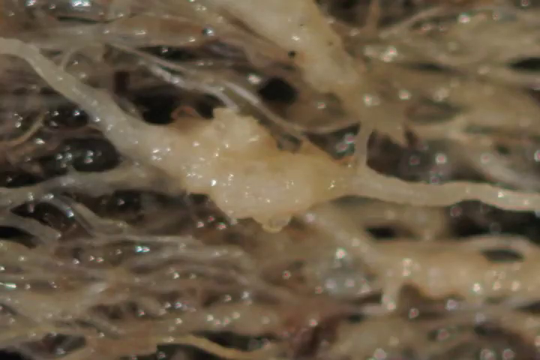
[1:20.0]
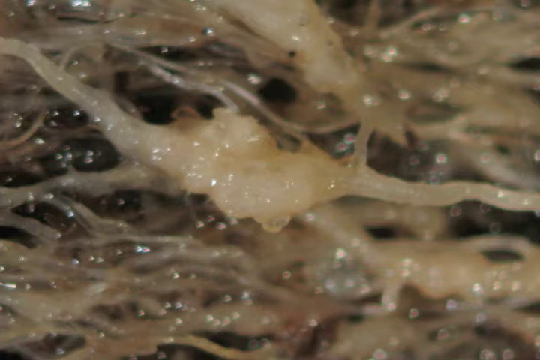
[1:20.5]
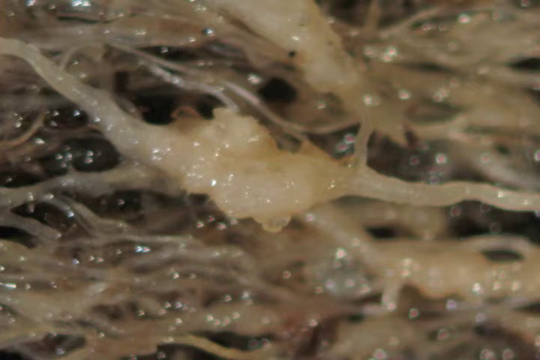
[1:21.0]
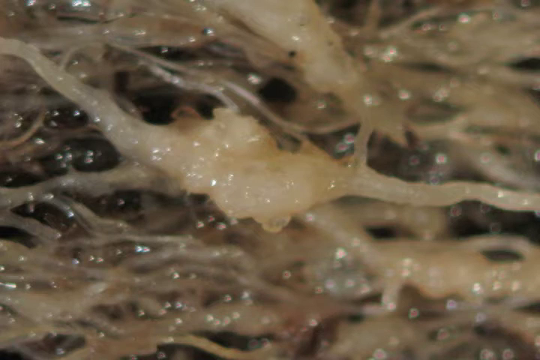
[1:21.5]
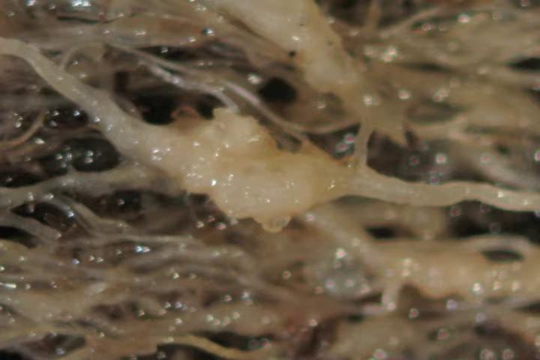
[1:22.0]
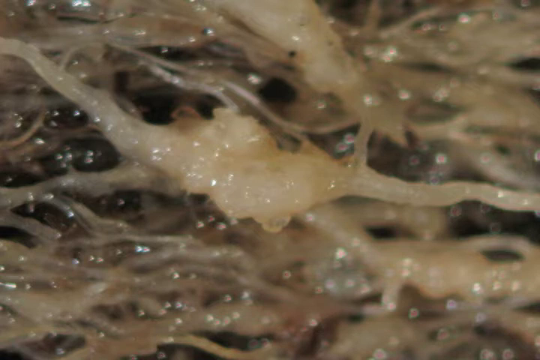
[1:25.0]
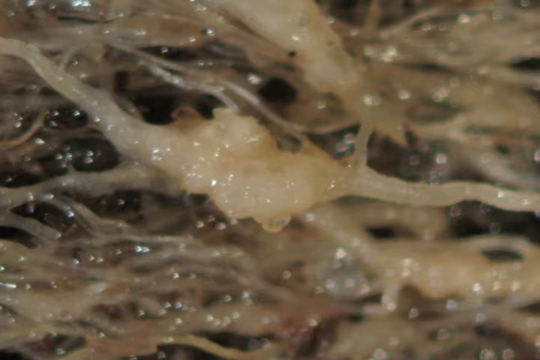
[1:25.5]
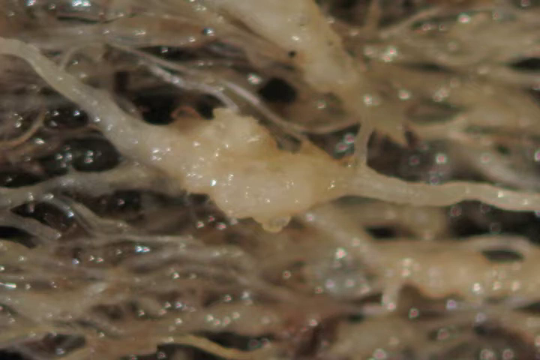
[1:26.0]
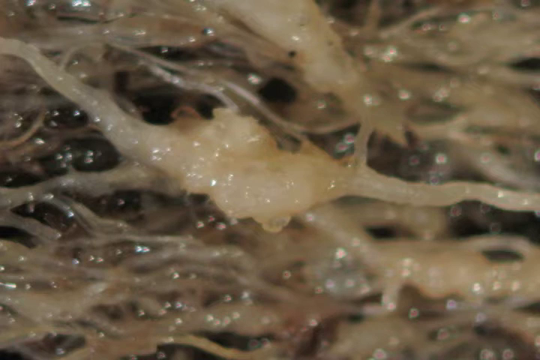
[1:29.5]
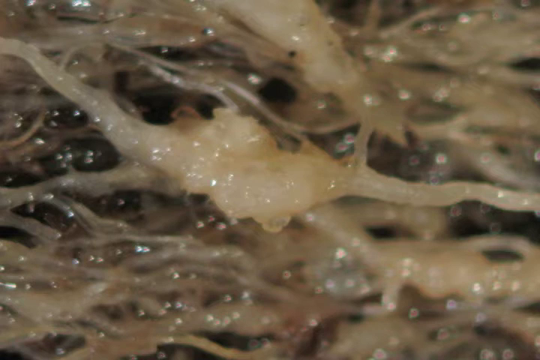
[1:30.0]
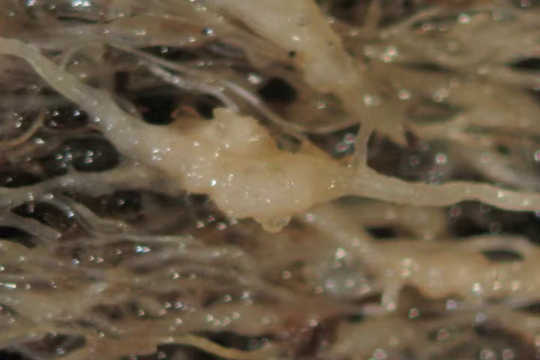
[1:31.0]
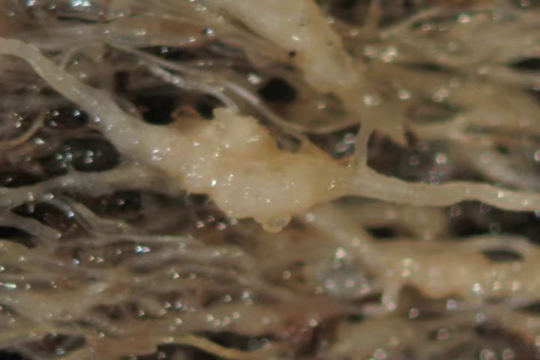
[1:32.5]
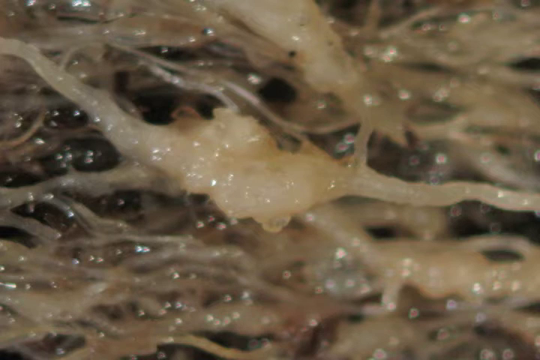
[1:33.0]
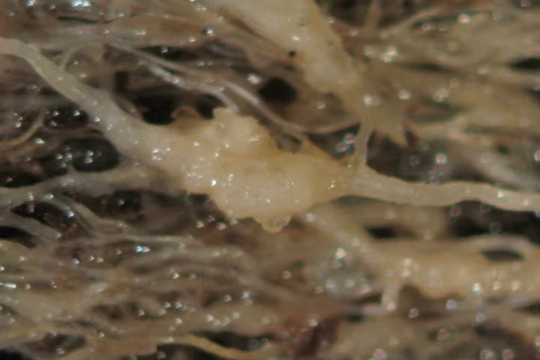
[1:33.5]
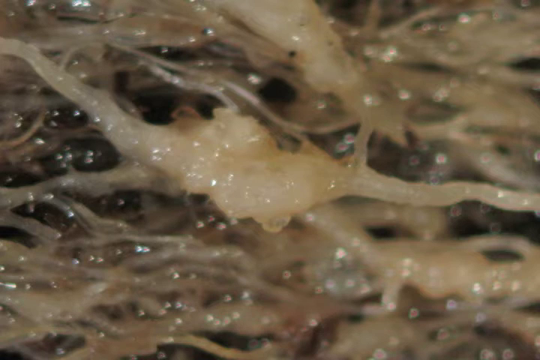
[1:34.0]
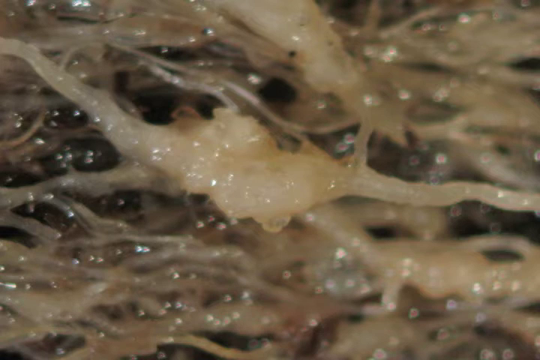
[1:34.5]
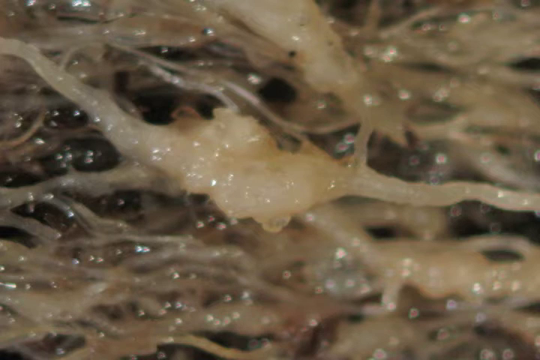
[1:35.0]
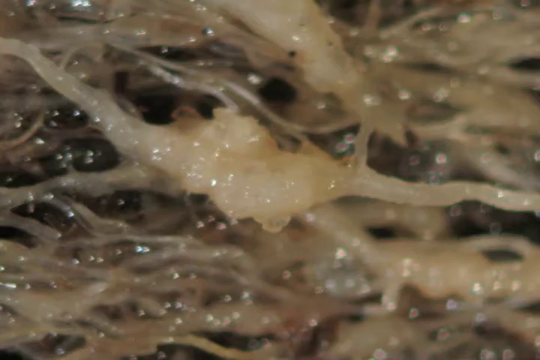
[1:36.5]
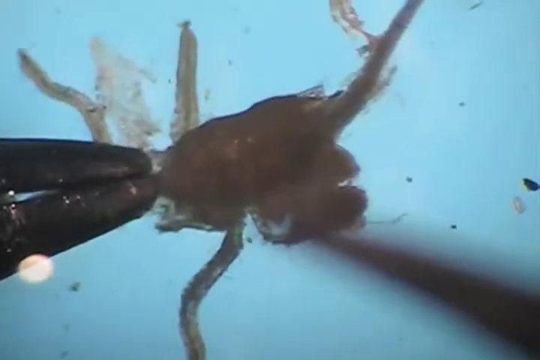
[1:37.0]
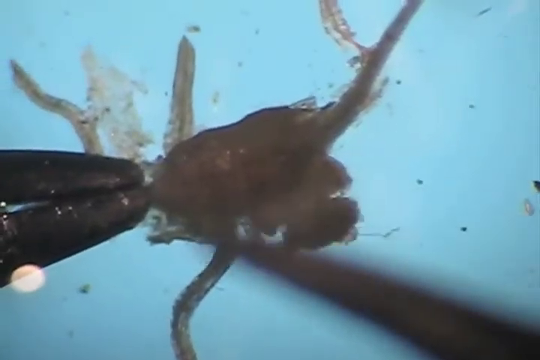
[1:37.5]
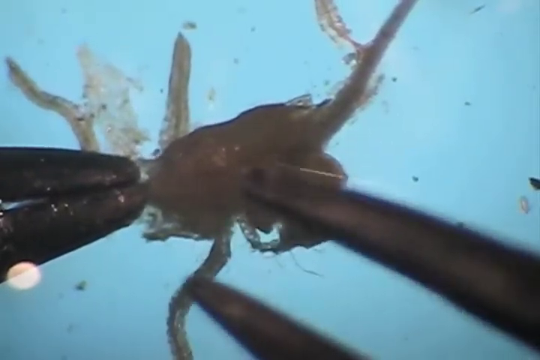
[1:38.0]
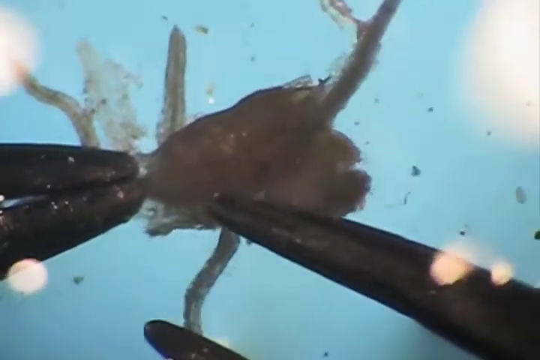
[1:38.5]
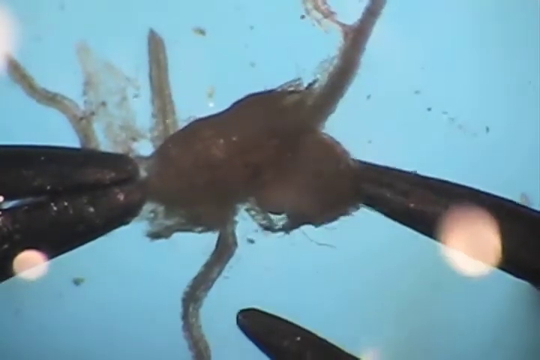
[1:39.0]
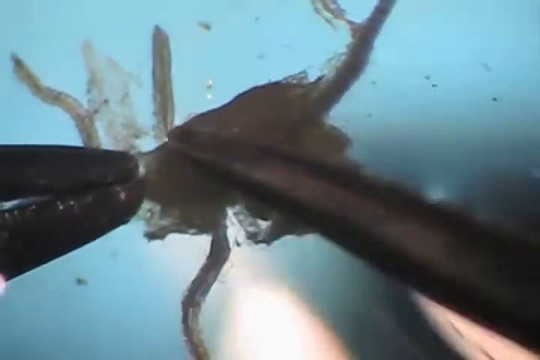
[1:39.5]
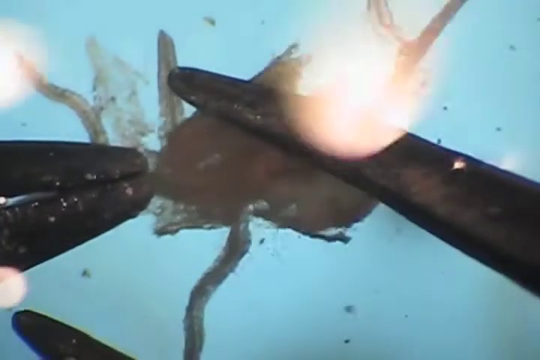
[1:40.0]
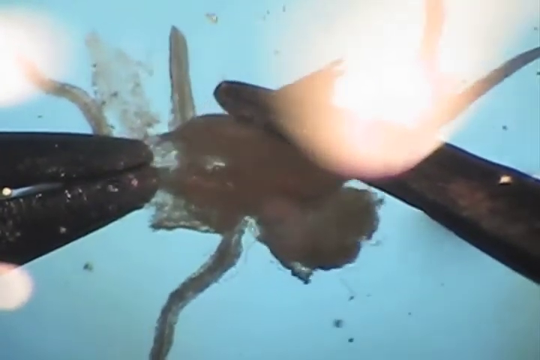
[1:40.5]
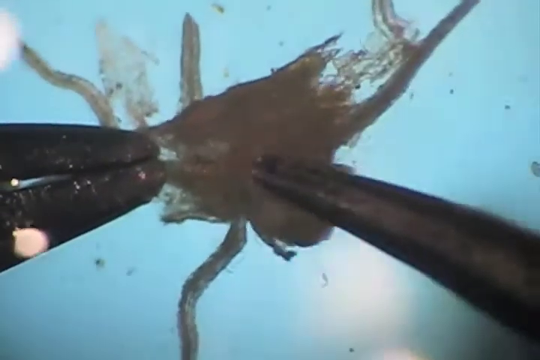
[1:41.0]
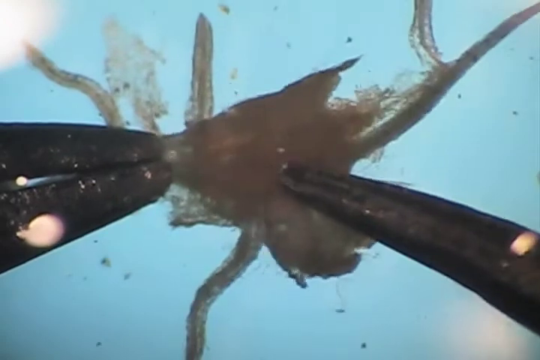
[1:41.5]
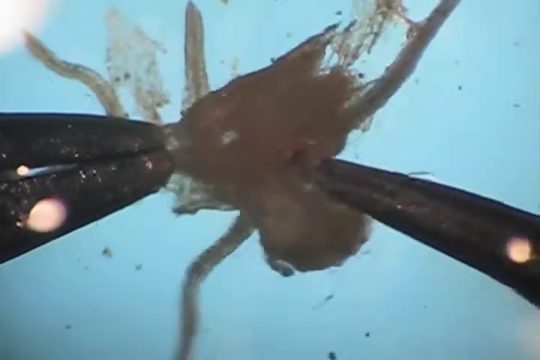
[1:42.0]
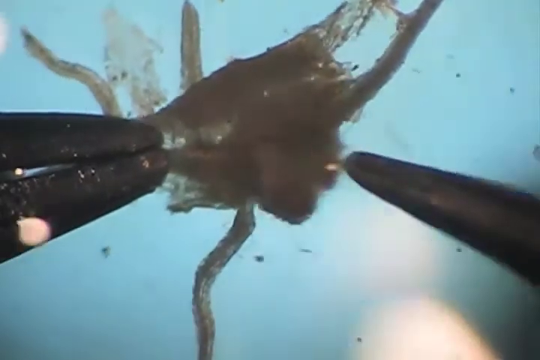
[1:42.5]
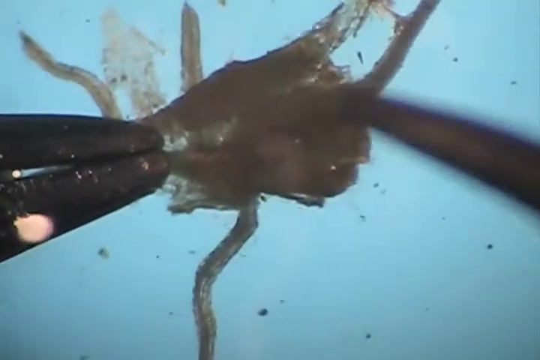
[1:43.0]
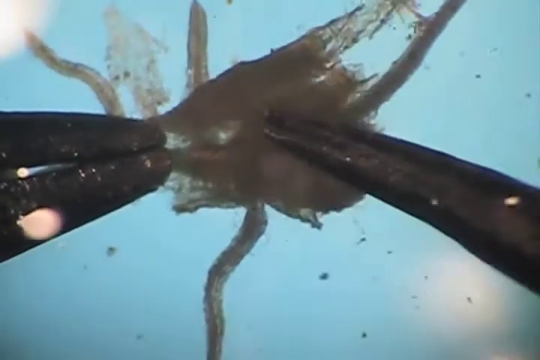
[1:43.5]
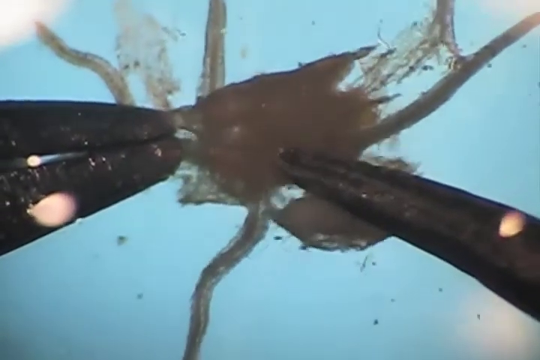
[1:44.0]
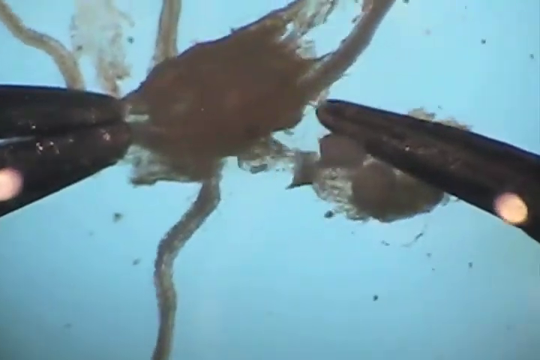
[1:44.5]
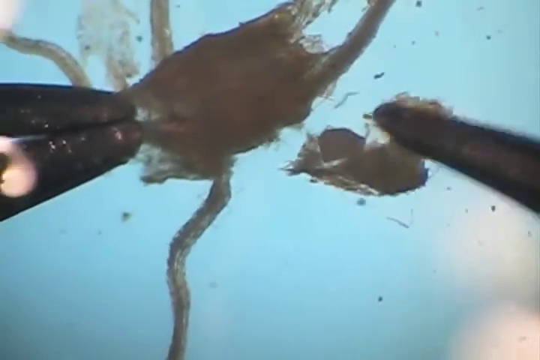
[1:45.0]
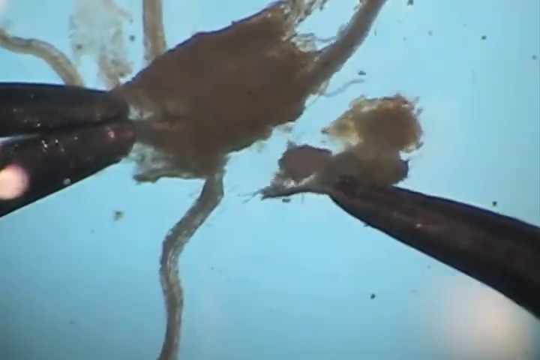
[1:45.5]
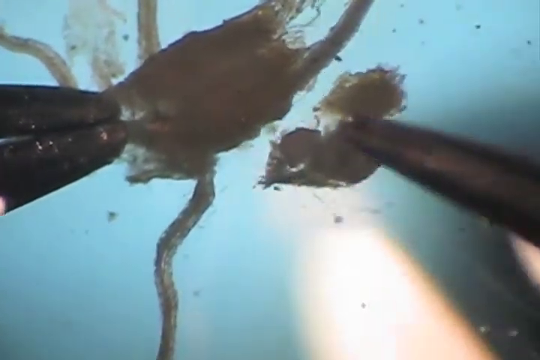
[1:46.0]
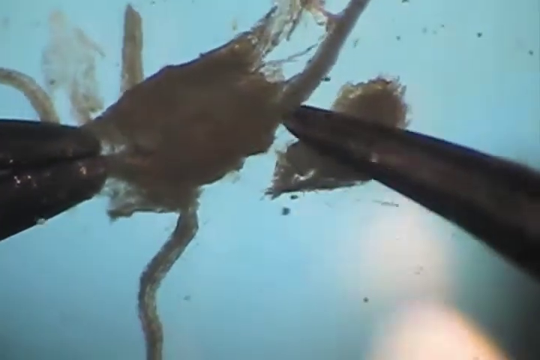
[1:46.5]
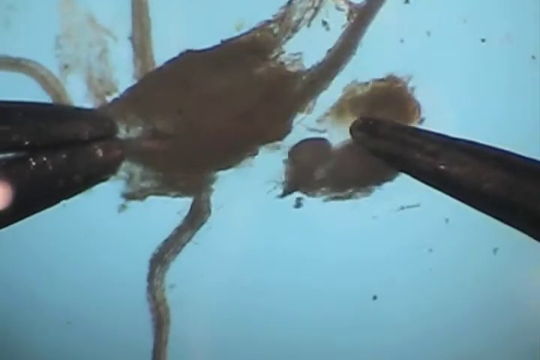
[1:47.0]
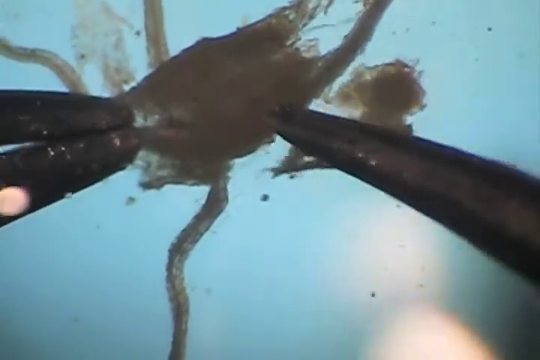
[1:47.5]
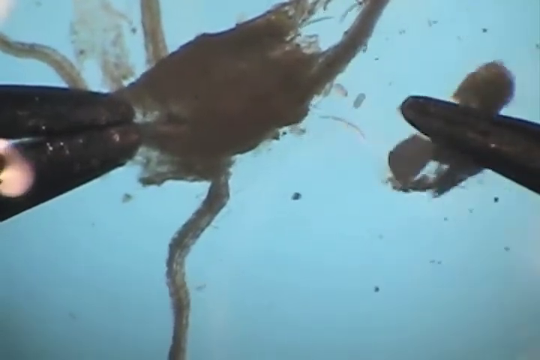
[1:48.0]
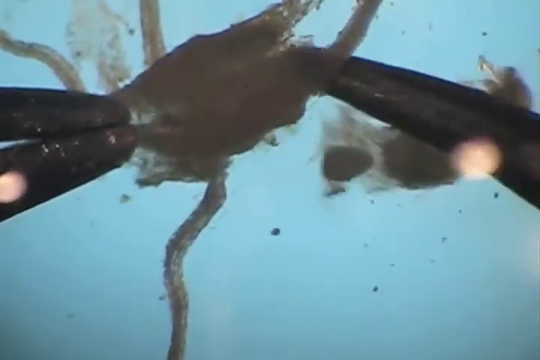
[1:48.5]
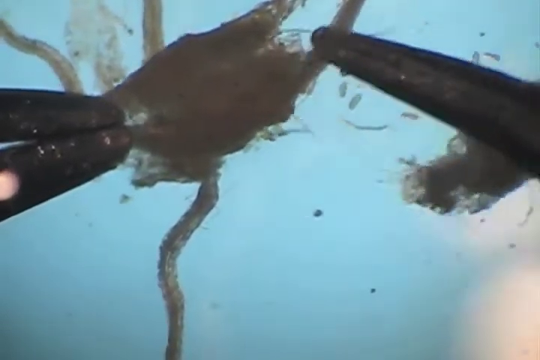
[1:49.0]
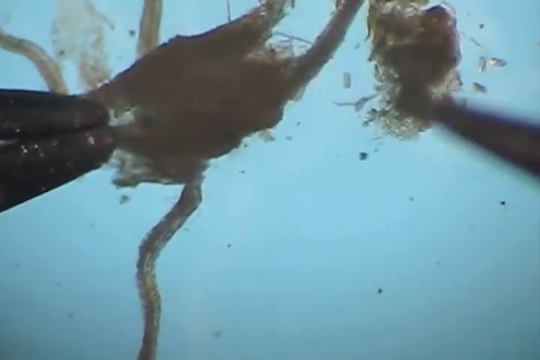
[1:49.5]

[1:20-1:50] A zoomed-in view from a microscope shows two black tweezers separating a piece of what seems to be a little root from the patch of grass. Three small roots come out of a thicker mass in the center. The tweezers grab the mass on the left and top and seem to be separating it or trying to break the piece off. The piece gripped by the right pair of tweezers breaks off. Small black dots appear in the outer view of the microscope. The grip seems to loosen, and the piece goes out of the tweezer's grip. The person tries to re-grip it multiple times but has trouble picking it back up.